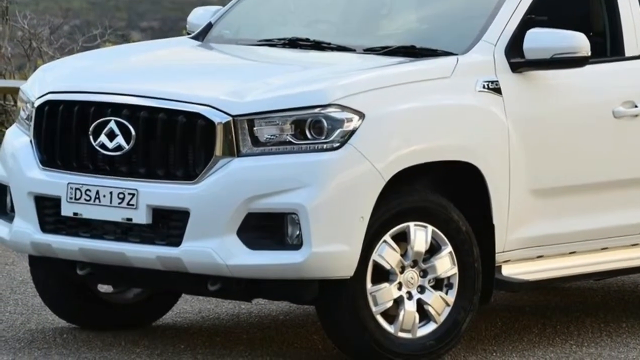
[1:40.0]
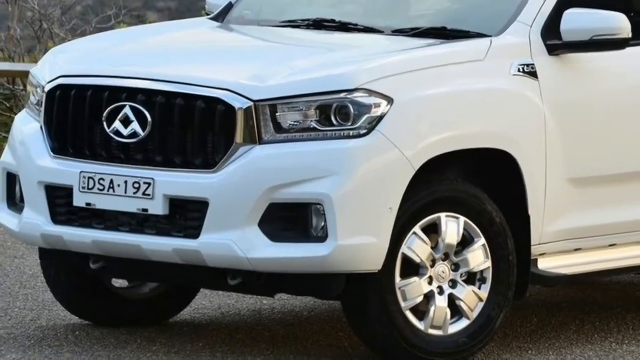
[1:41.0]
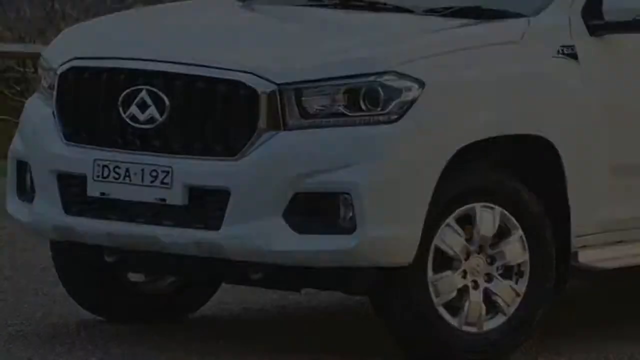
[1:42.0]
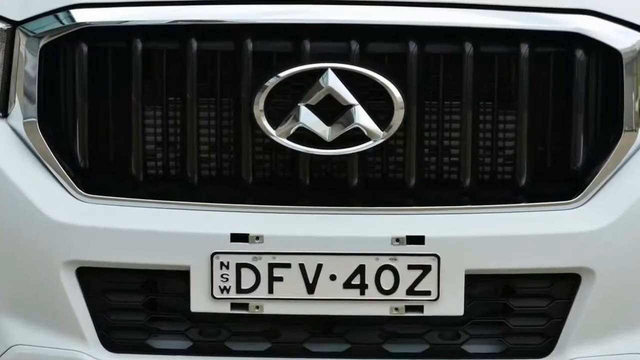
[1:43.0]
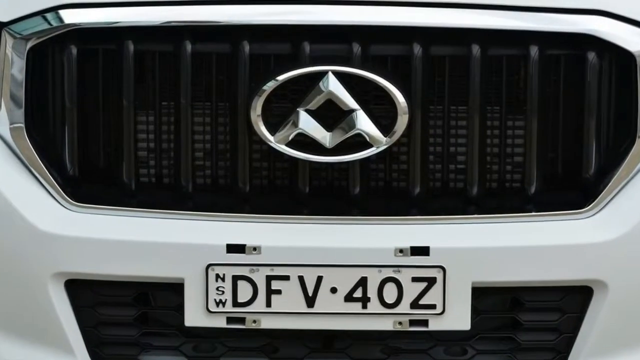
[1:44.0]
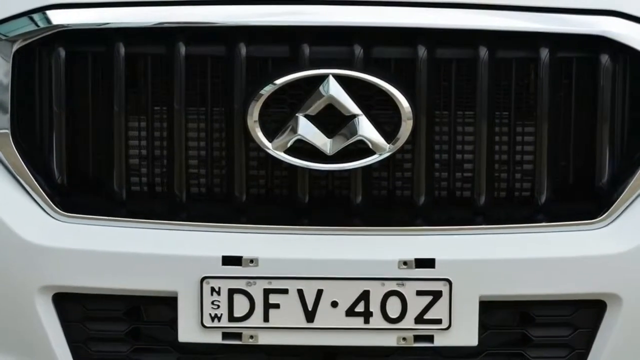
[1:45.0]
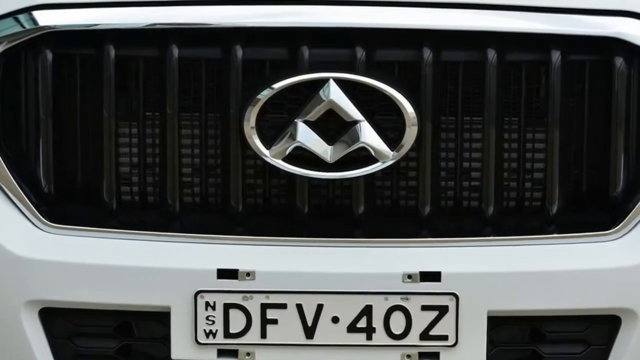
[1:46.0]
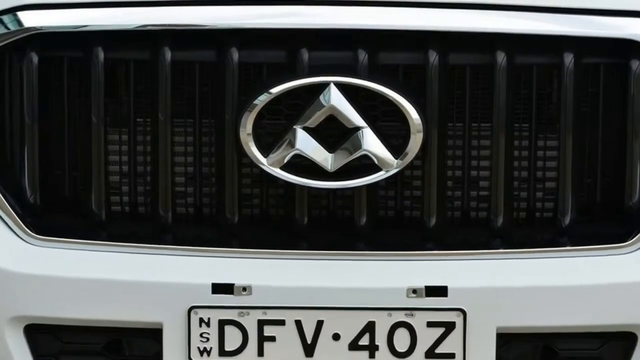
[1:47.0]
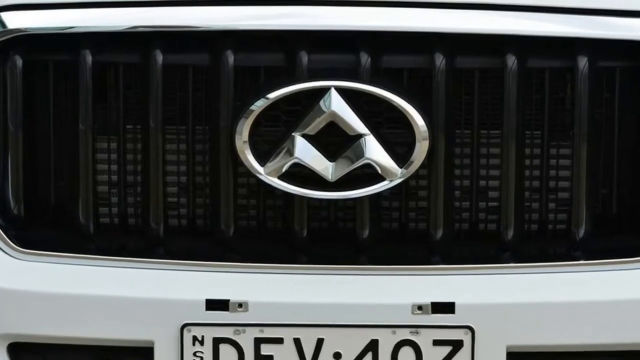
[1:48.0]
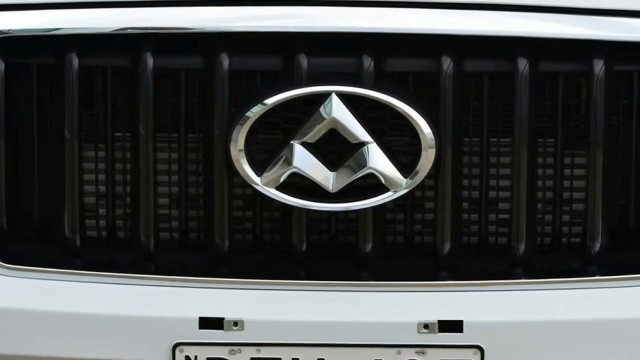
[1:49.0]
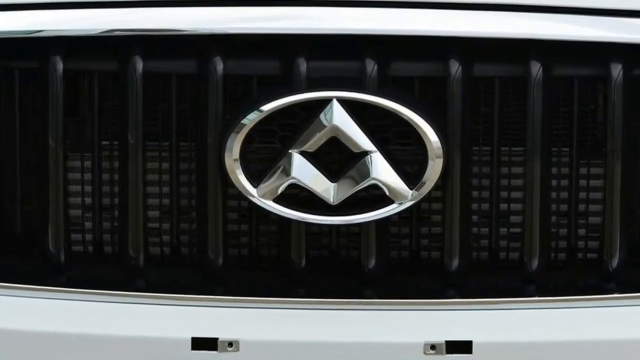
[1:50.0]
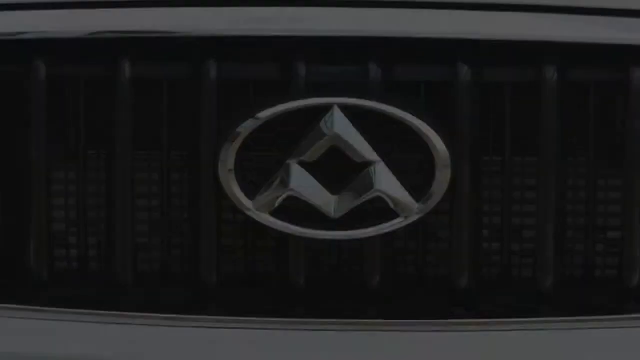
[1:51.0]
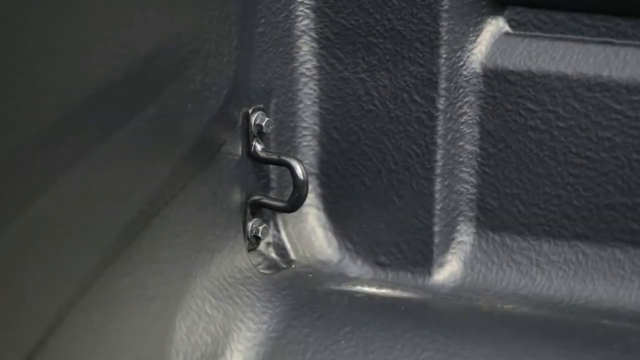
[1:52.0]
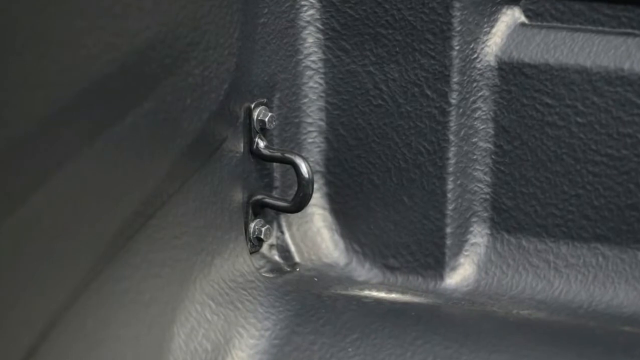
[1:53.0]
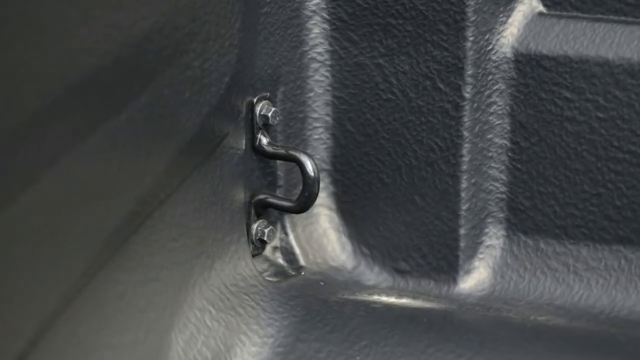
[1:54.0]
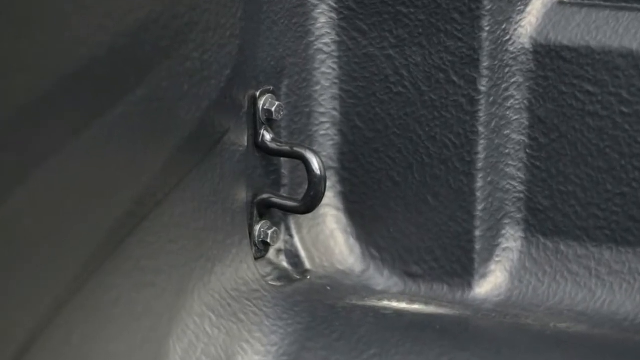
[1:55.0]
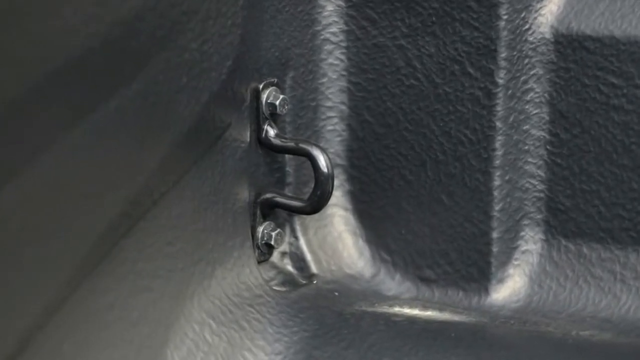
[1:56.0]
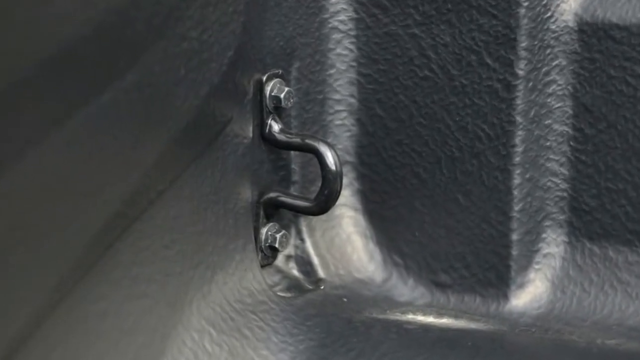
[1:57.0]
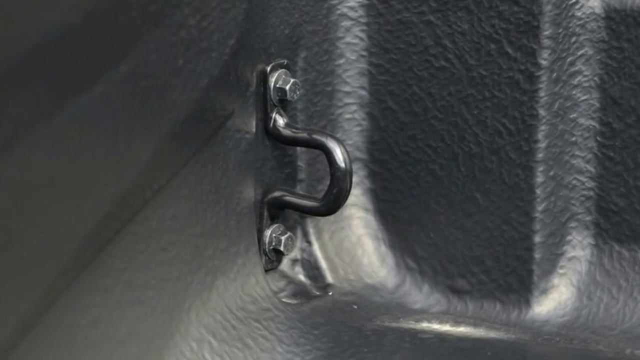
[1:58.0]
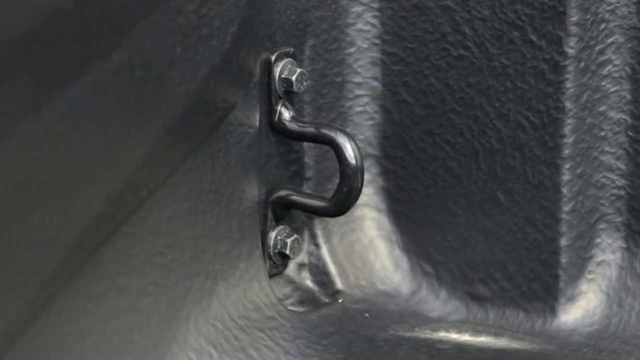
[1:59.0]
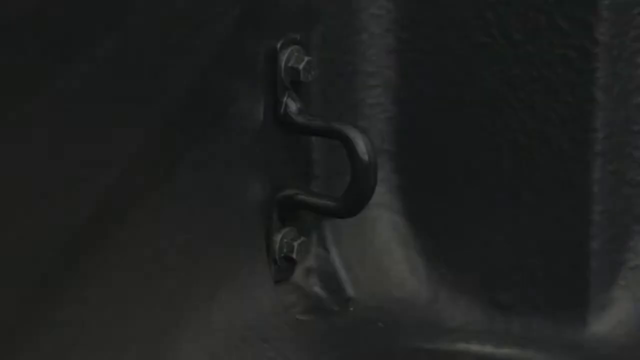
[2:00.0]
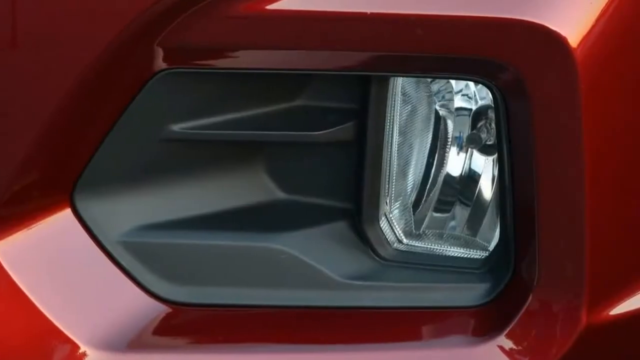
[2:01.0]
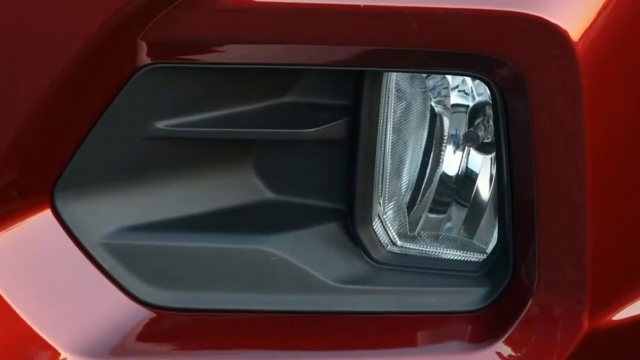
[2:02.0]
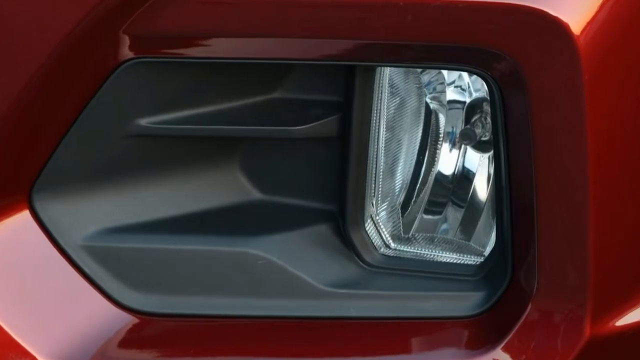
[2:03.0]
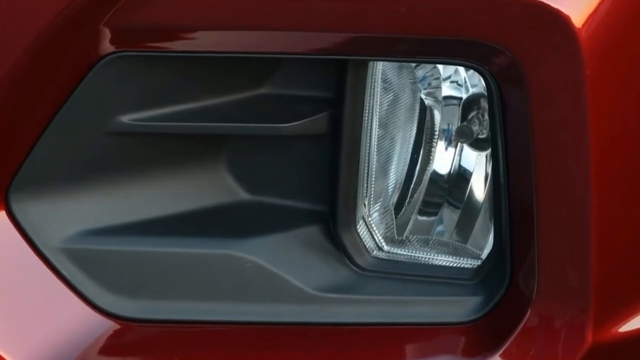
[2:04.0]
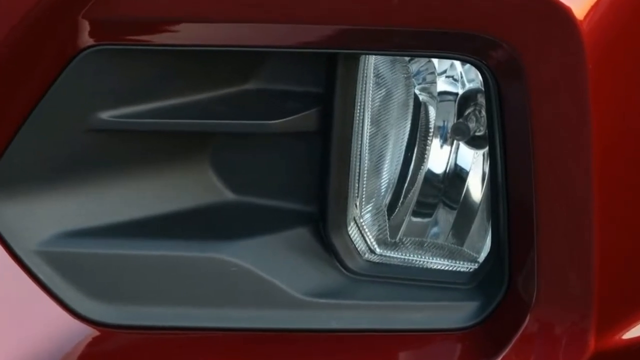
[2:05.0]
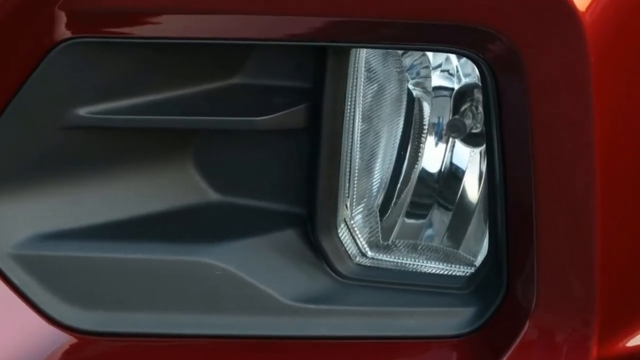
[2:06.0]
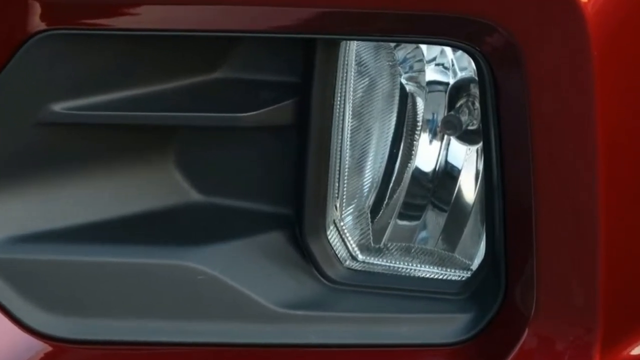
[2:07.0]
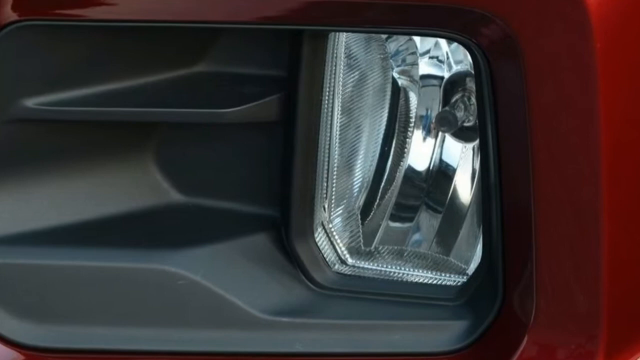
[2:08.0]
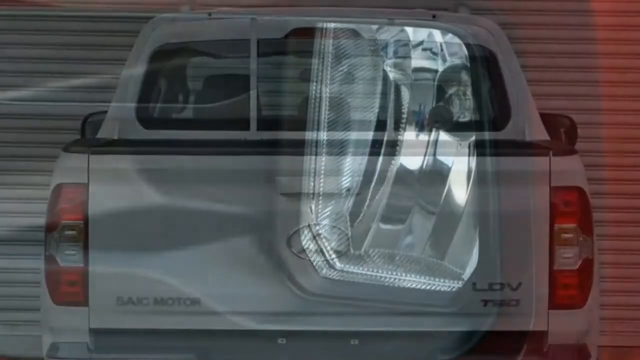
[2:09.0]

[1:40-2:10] A white truck is shown; it looks brand new, probably for sale, possibly on a lot or possibly in someone's driveway. It looks like it maybe has four doors. The windows look almost black because of the lighting, while the white body is visible. The truck is on what looks like cement. The camera then focuses on the emblem on the front, which almost looks like a capital letter A but goes down in the middle area. The license plate reads "DFV-4OZ."